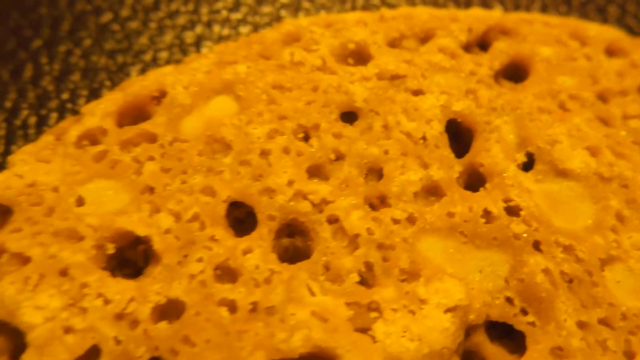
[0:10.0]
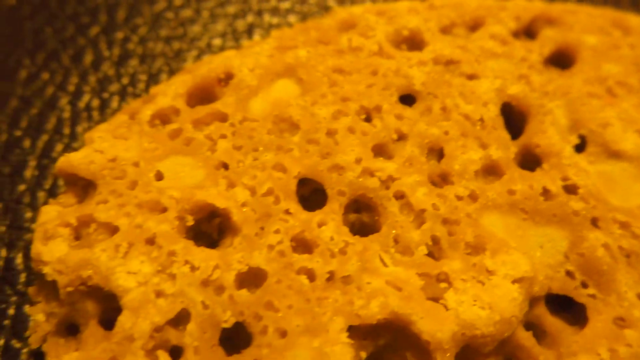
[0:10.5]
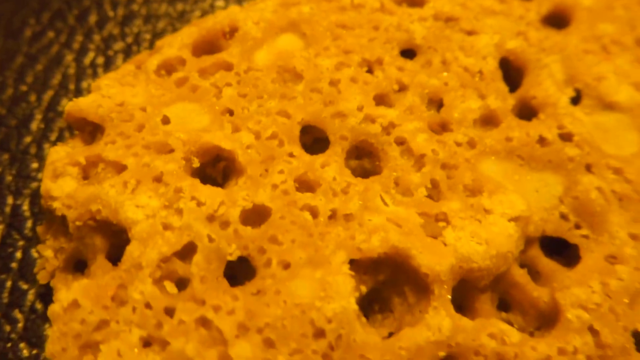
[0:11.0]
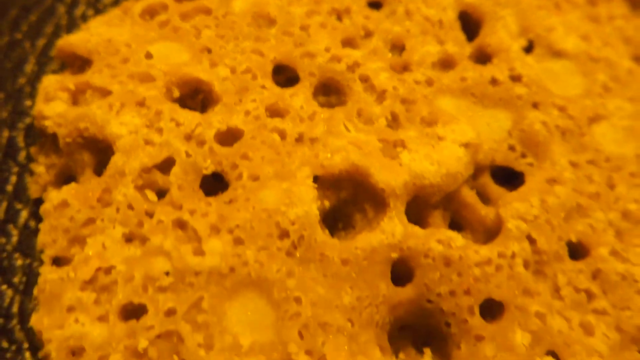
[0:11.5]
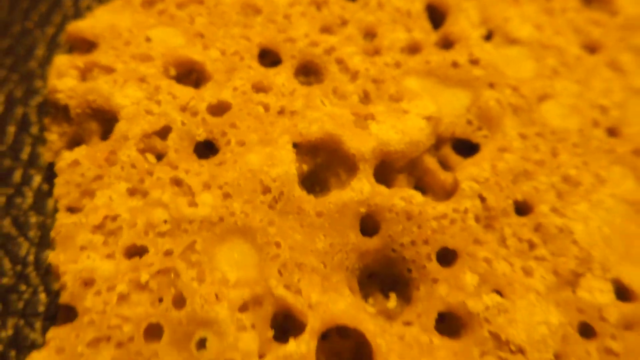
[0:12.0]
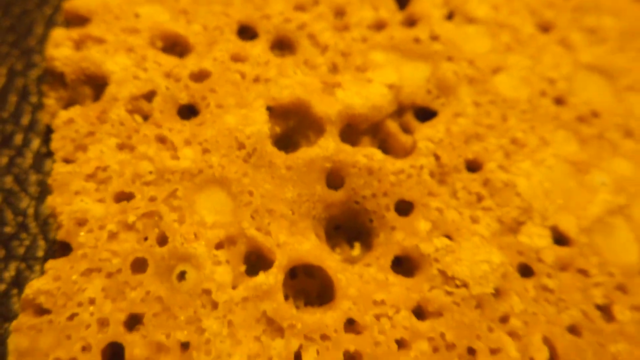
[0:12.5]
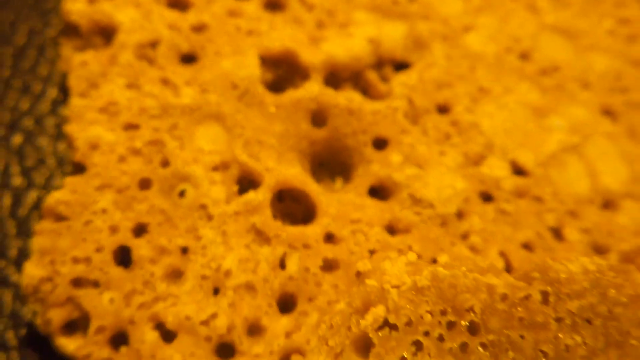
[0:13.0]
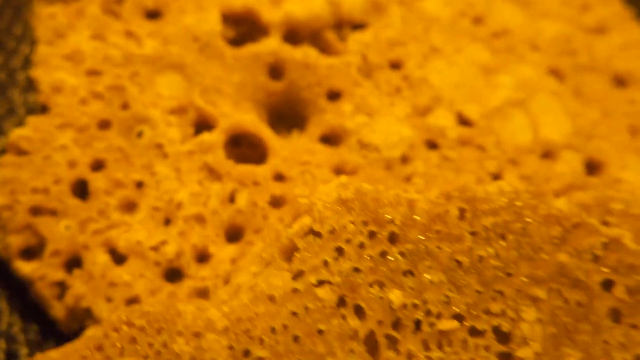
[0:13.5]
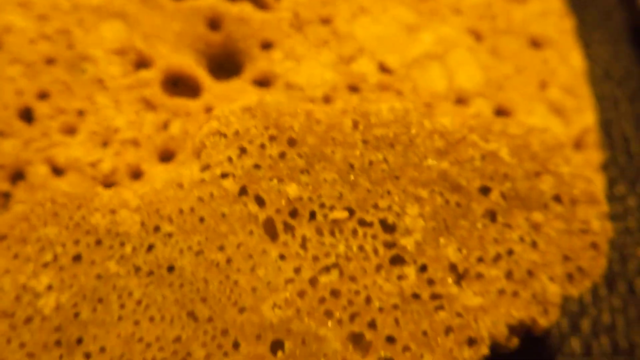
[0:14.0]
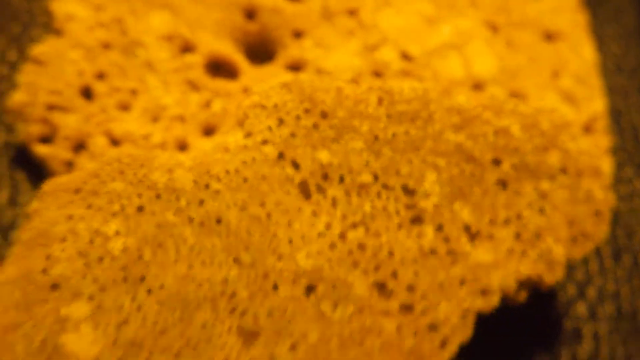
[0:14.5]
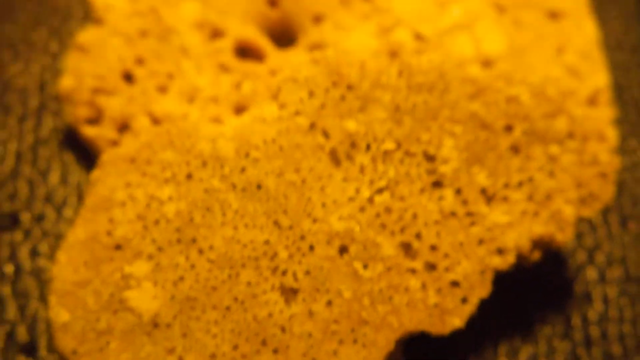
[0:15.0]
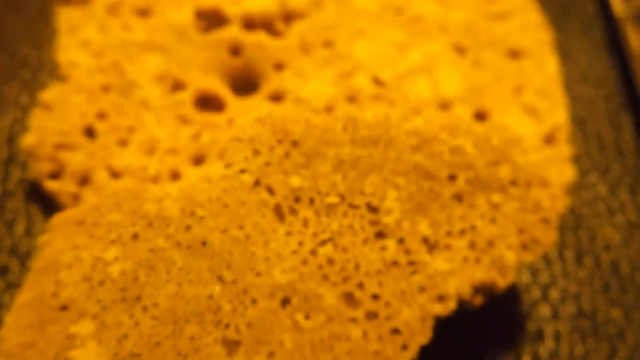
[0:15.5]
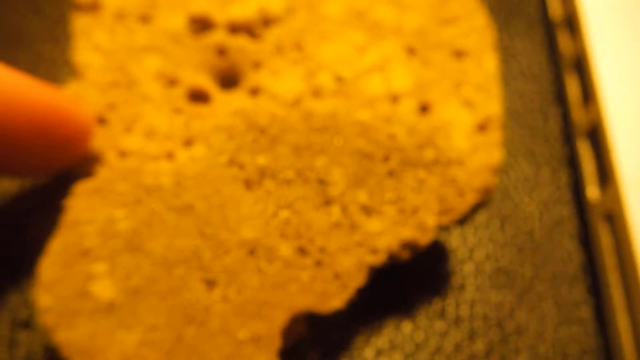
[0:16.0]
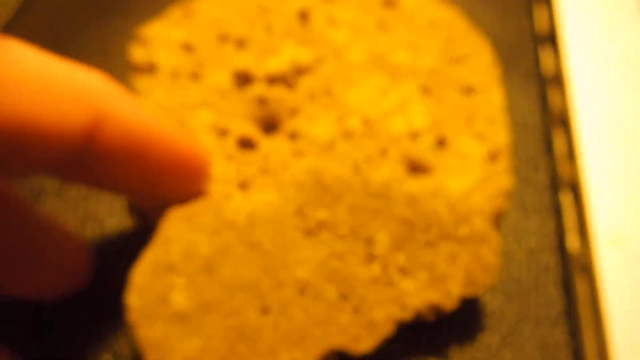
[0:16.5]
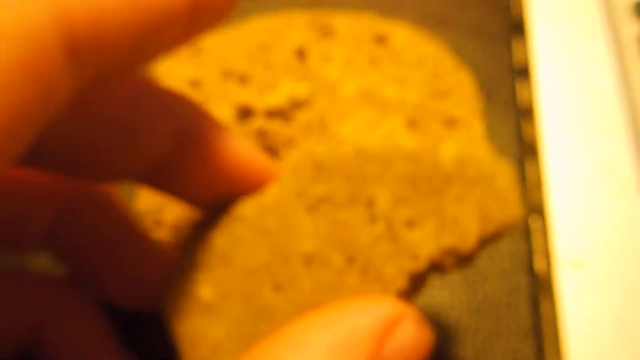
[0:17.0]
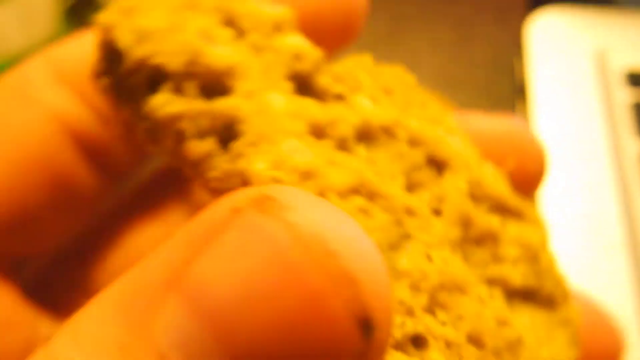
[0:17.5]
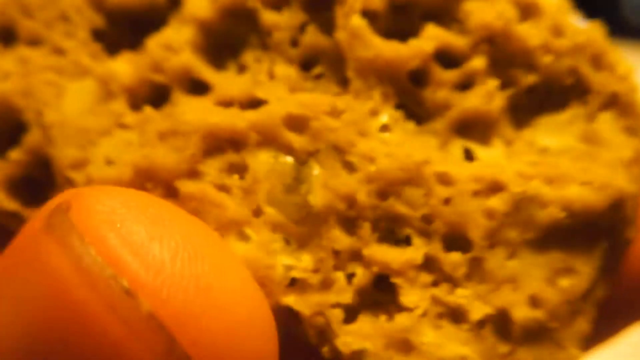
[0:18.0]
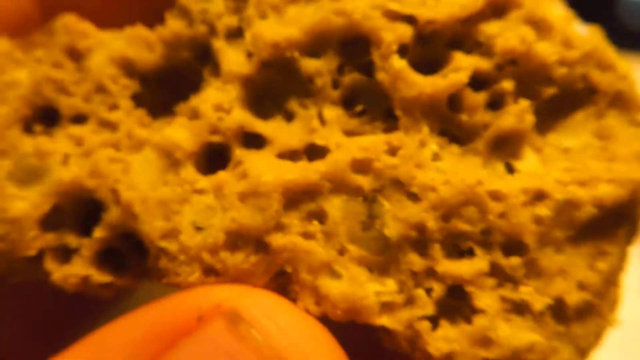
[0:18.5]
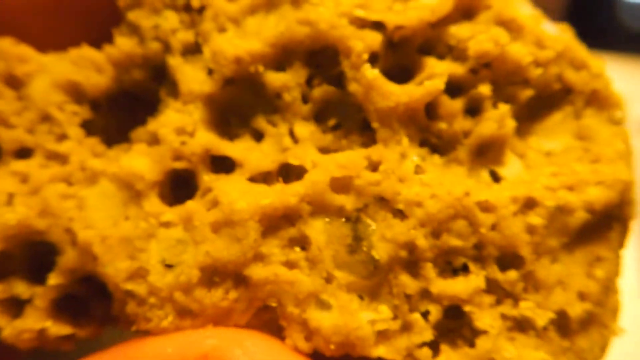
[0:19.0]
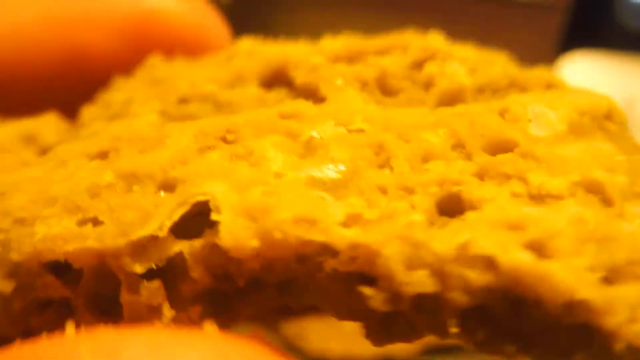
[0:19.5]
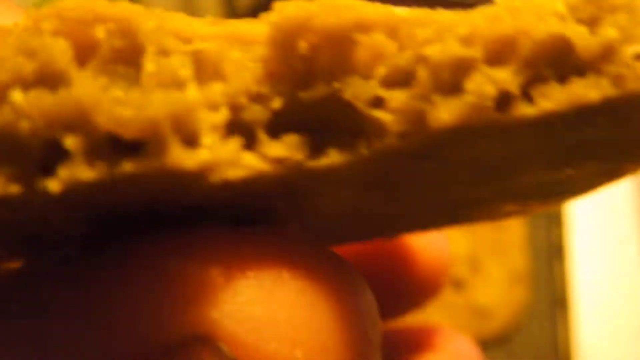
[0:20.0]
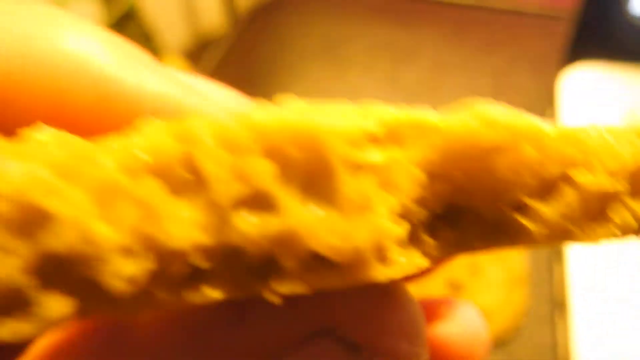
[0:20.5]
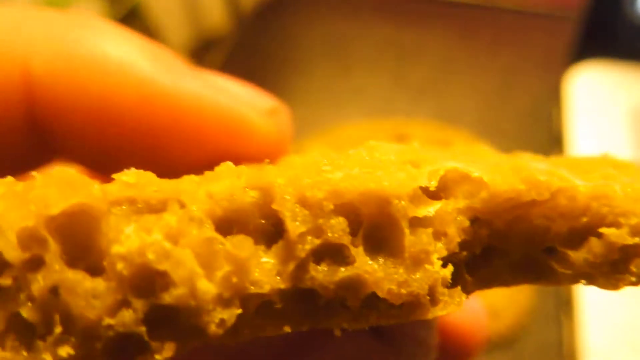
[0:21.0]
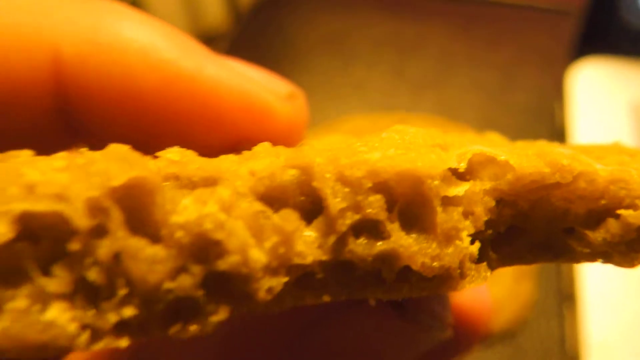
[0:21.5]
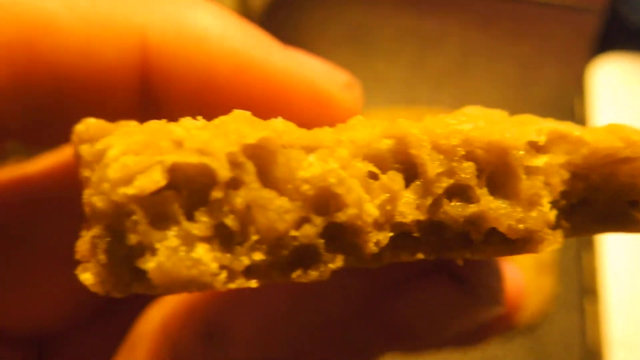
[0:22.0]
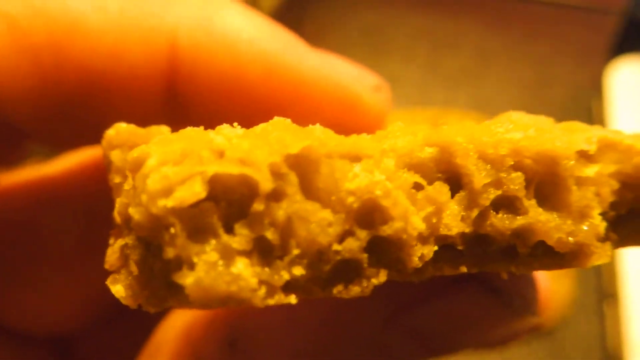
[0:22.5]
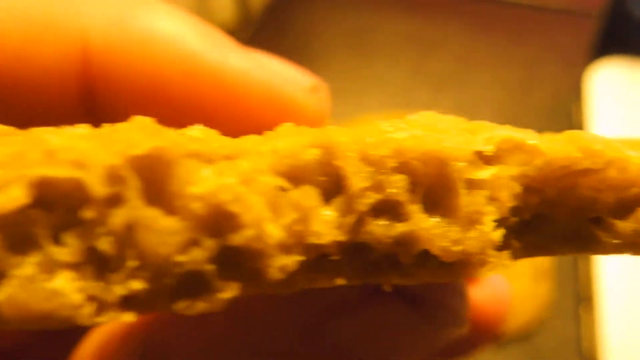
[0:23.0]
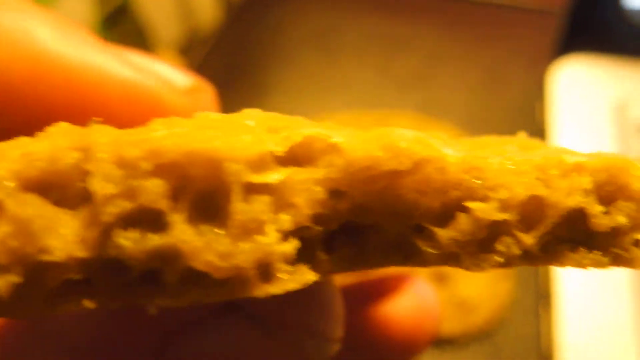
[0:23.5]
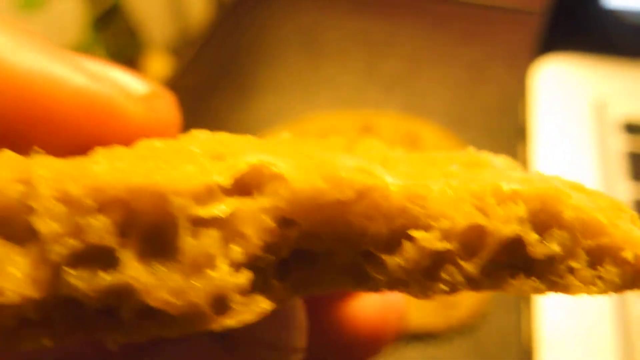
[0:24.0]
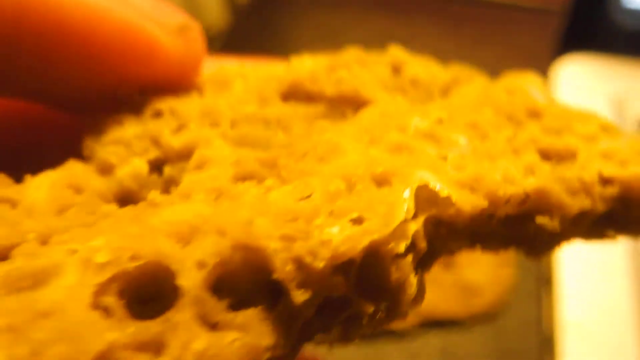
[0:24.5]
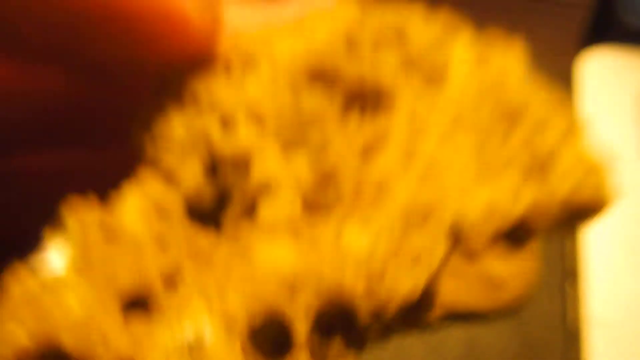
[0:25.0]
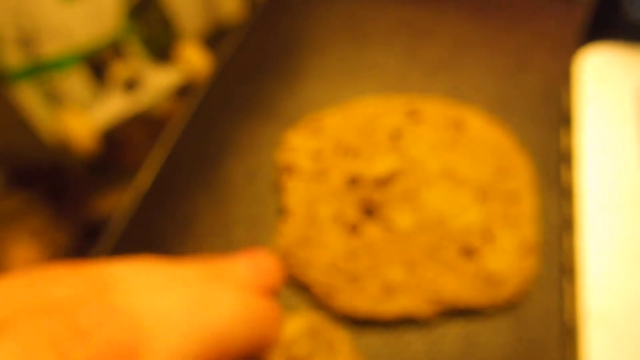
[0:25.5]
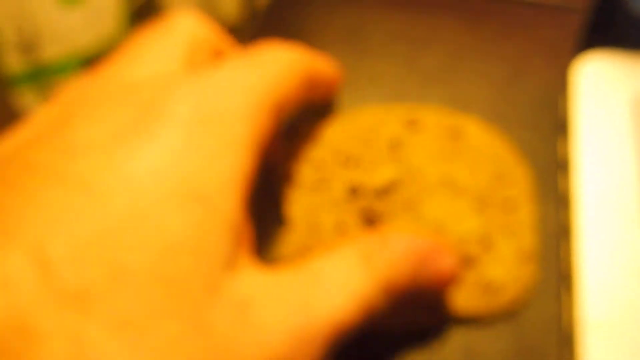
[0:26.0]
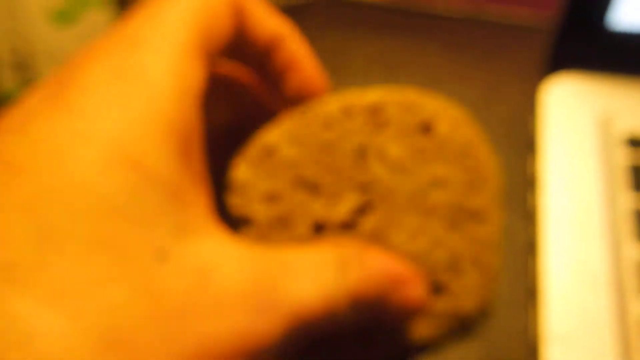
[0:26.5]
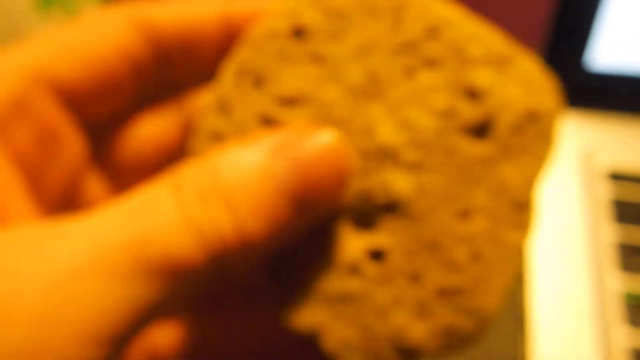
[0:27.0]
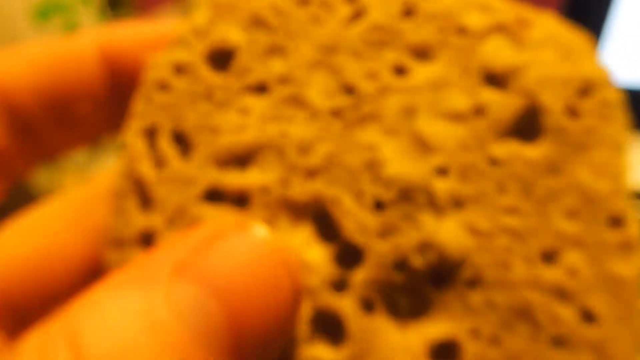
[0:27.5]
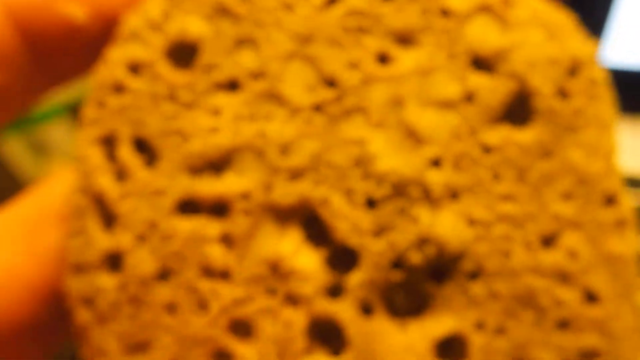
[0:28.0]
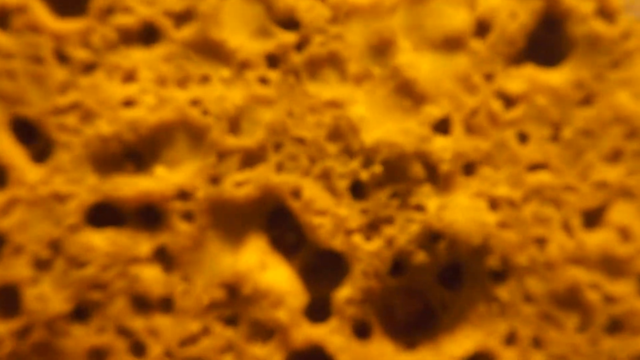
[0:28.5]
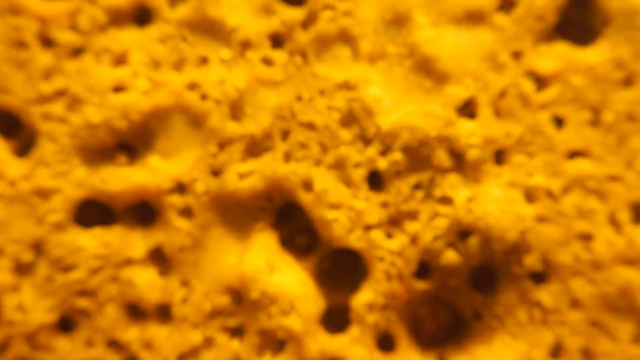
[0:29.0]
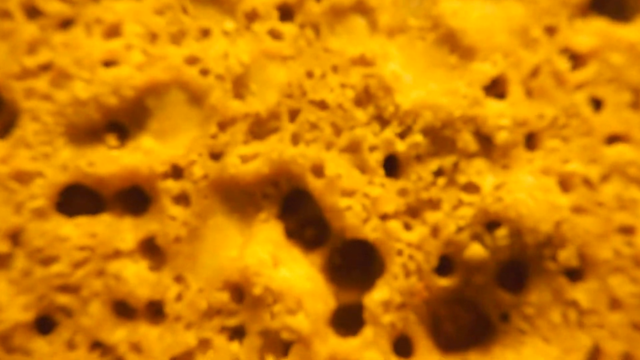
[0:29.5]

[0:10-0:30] The camera shows a close-up of the more round piece with the larger nooks and crannies, moving around its edges, and the other piece with the smaller nooks and crannies can be seen on top of it. The person filming picks up the piece, which looks like it may be a piece of bread, and shows its edge with all of its nooks and crannies. When the second piece is picked up, it almost looks more like a cookie or something than a piece of bread. It is very hard to tell exactly what the food is; the first piece could be a cookie broken in half.